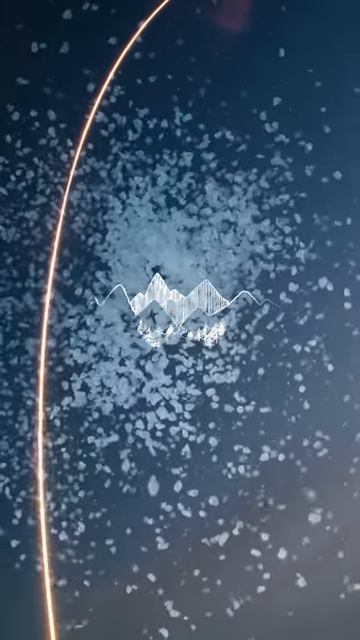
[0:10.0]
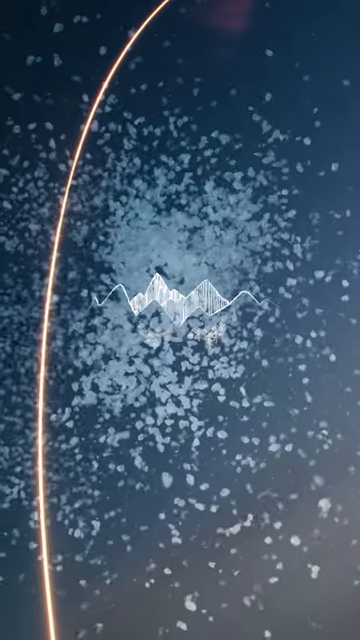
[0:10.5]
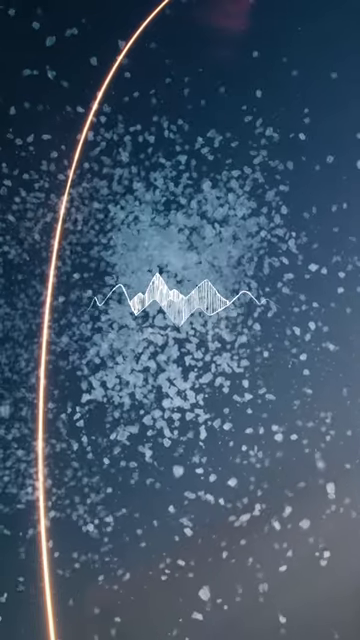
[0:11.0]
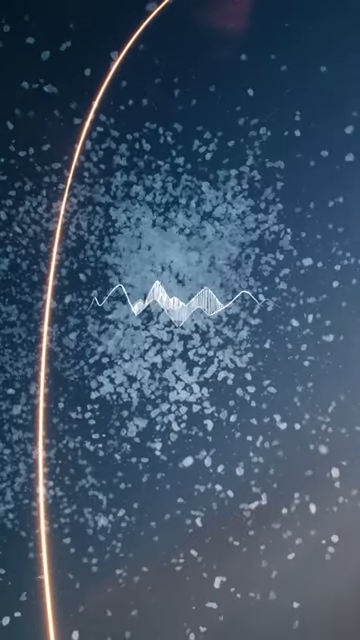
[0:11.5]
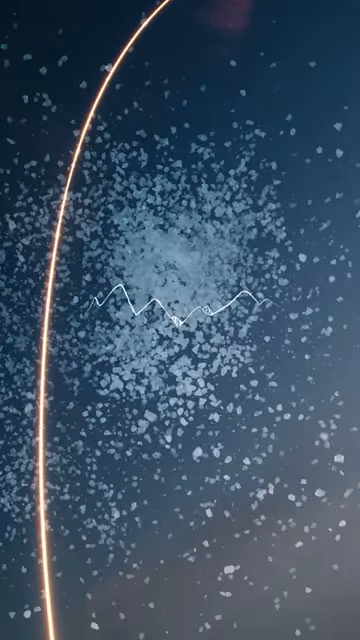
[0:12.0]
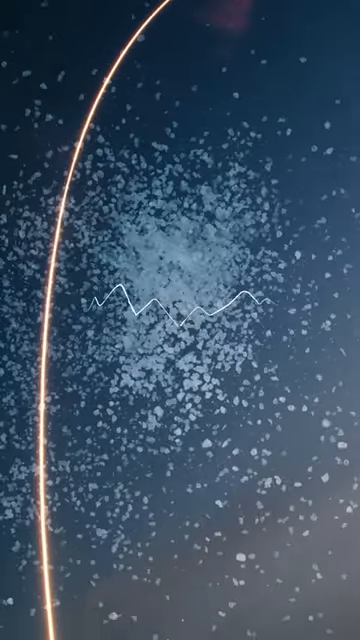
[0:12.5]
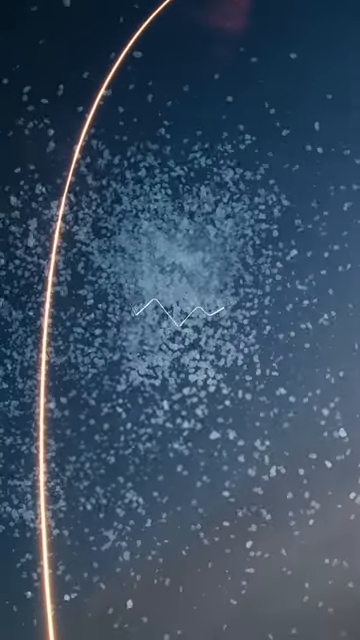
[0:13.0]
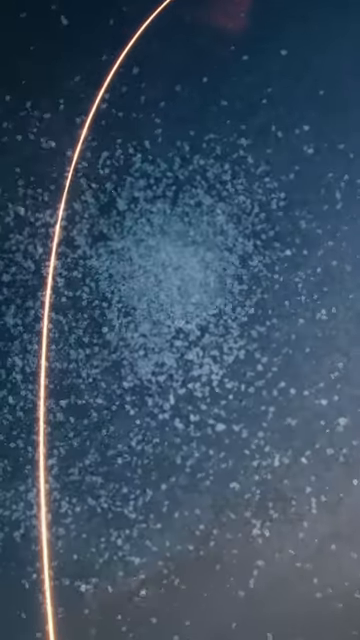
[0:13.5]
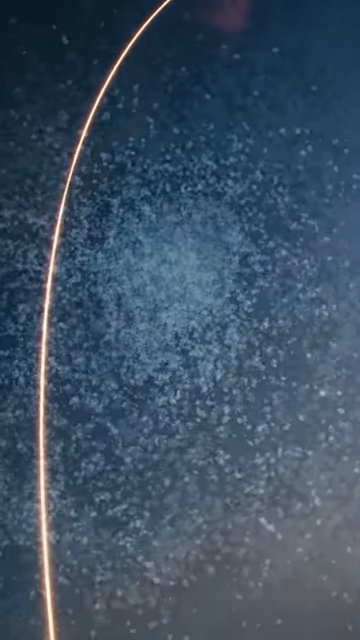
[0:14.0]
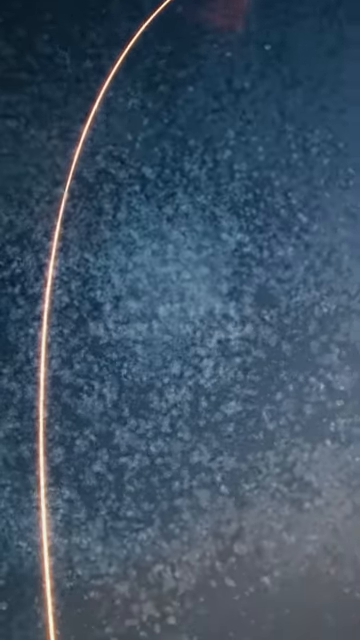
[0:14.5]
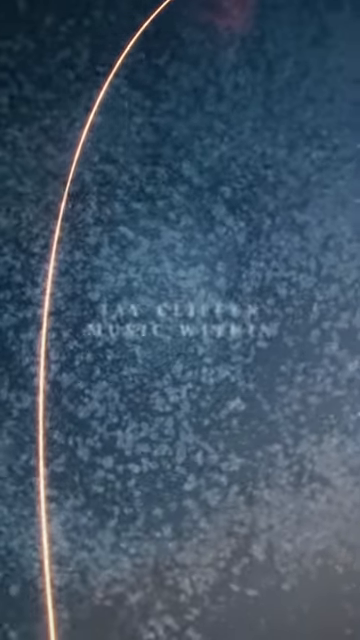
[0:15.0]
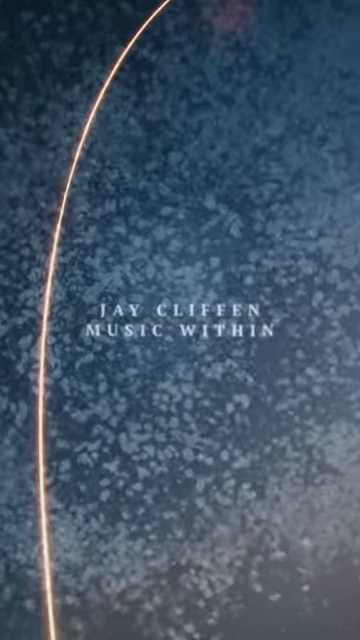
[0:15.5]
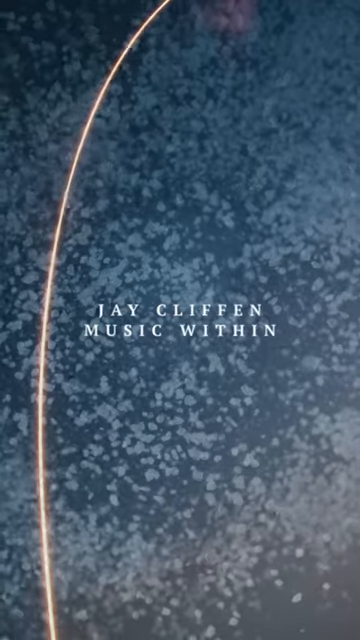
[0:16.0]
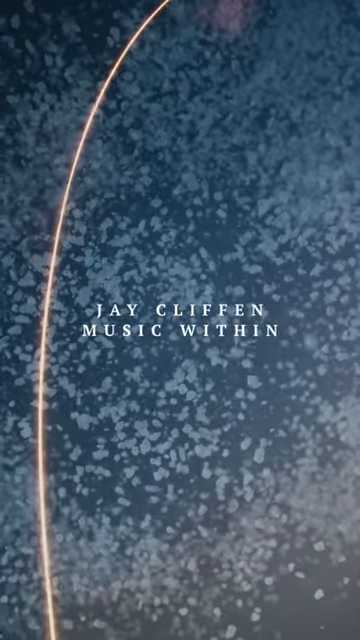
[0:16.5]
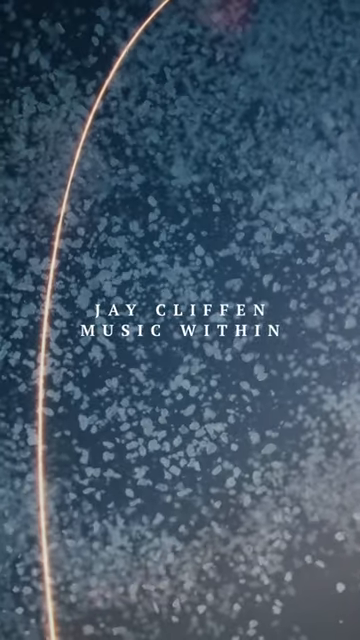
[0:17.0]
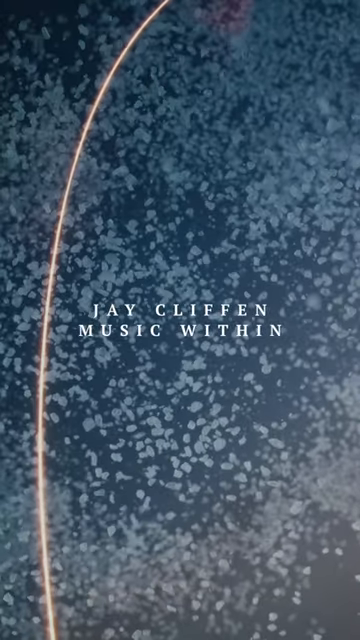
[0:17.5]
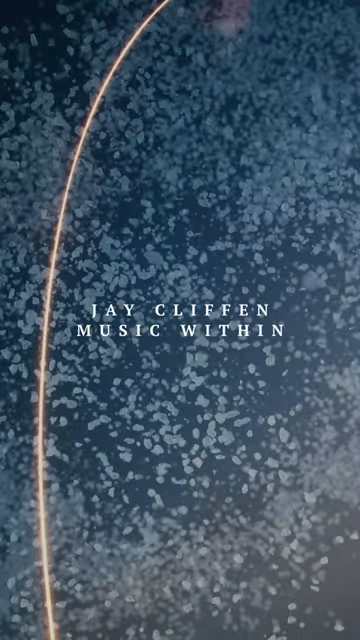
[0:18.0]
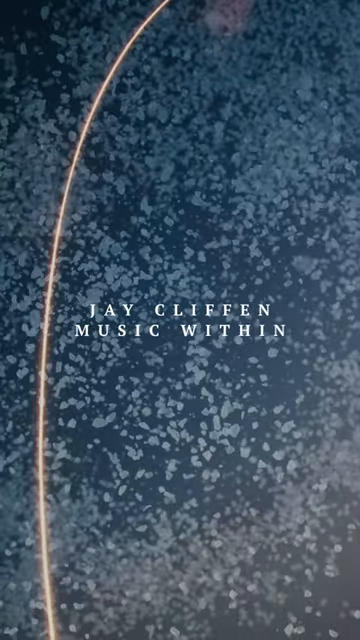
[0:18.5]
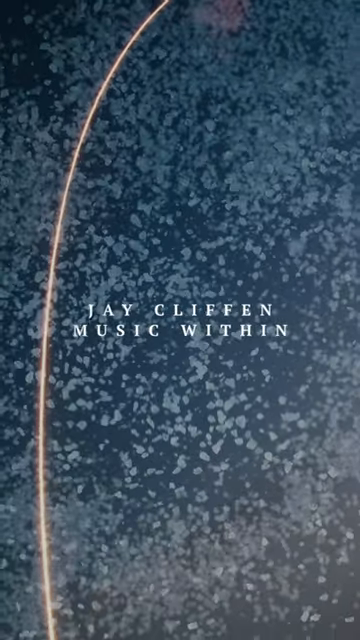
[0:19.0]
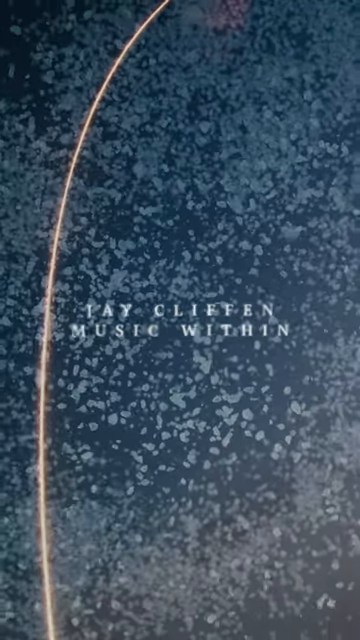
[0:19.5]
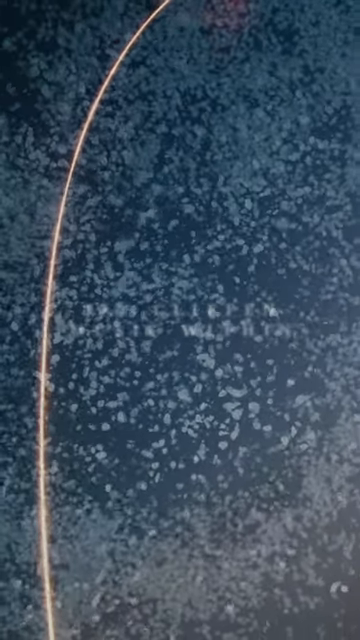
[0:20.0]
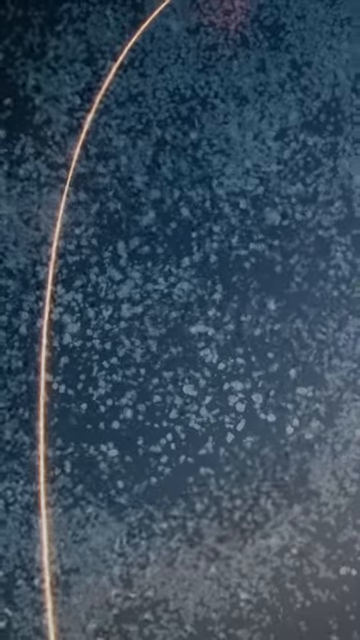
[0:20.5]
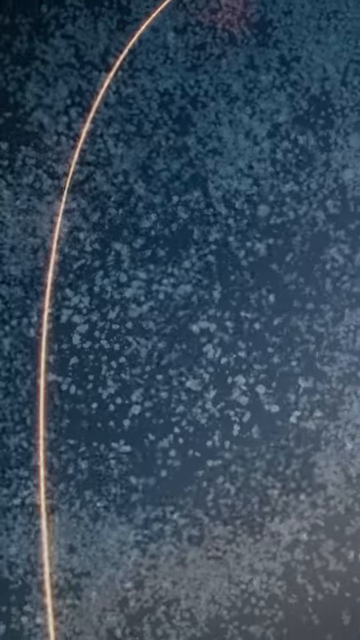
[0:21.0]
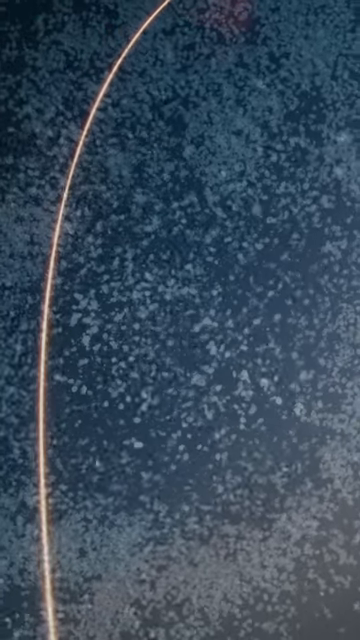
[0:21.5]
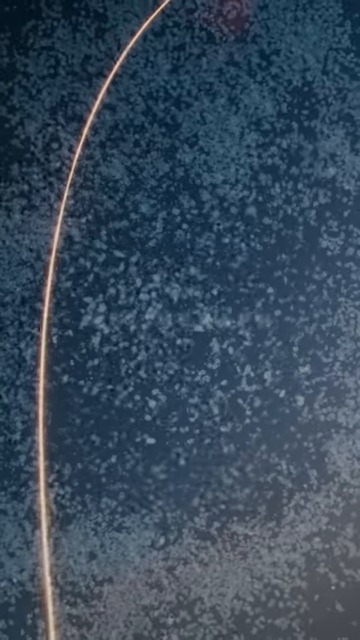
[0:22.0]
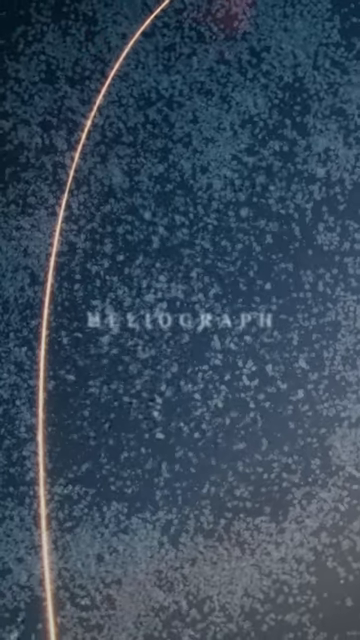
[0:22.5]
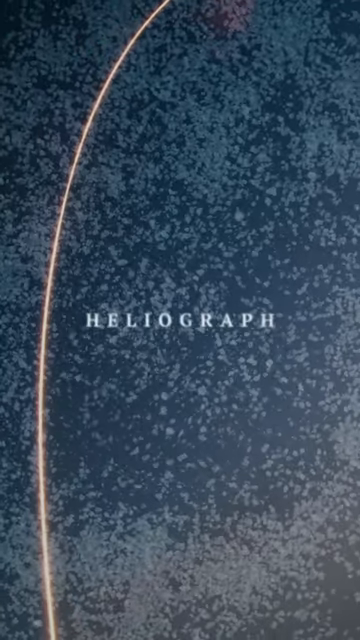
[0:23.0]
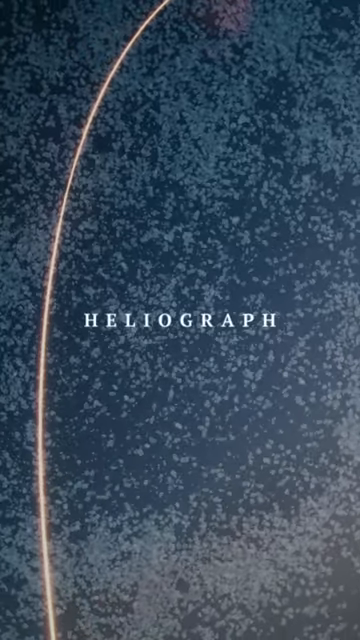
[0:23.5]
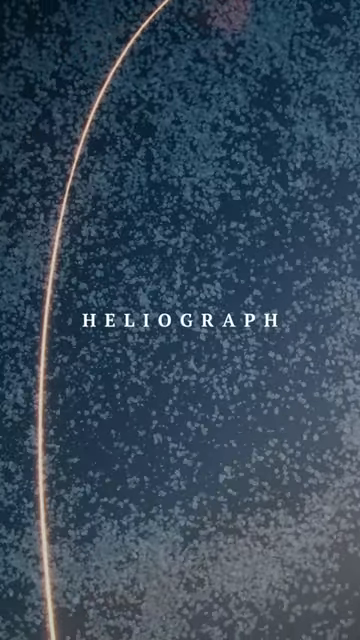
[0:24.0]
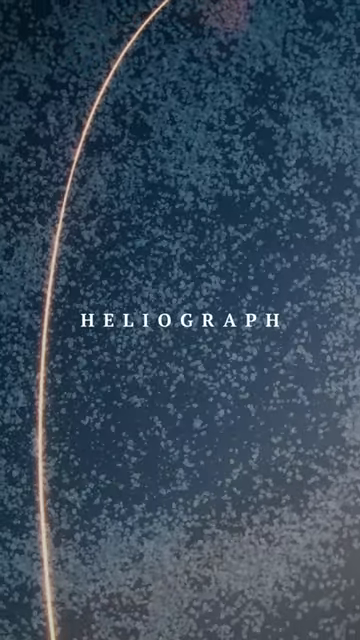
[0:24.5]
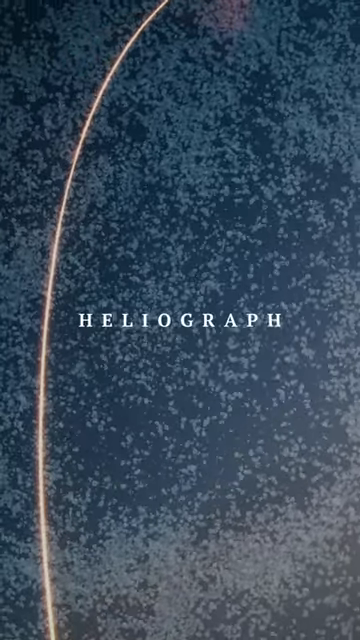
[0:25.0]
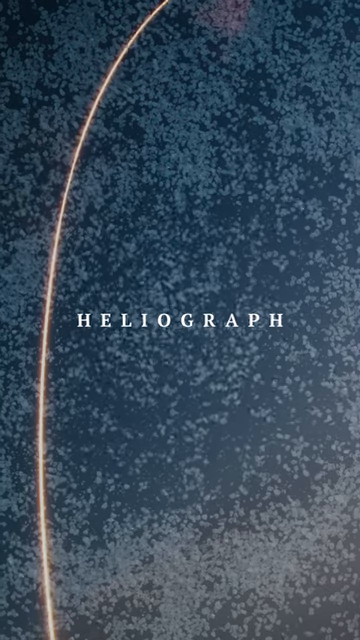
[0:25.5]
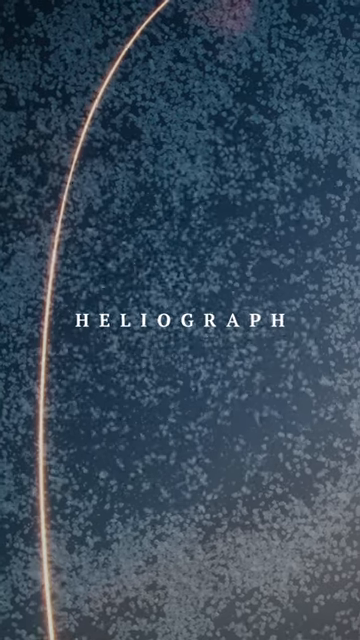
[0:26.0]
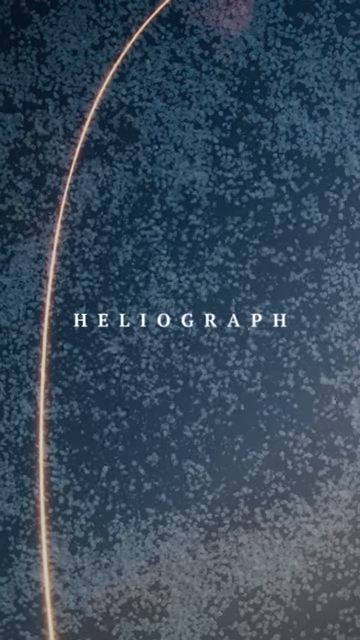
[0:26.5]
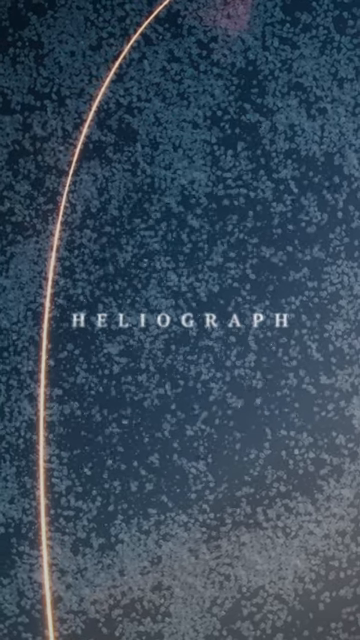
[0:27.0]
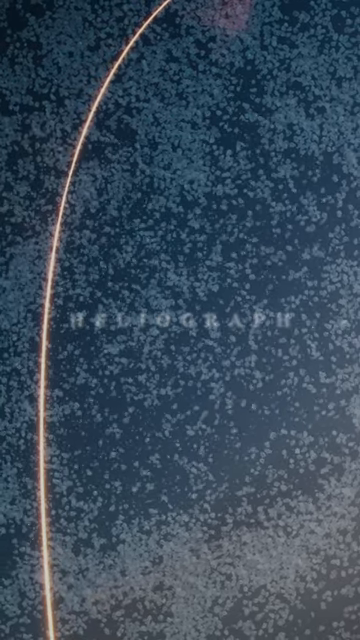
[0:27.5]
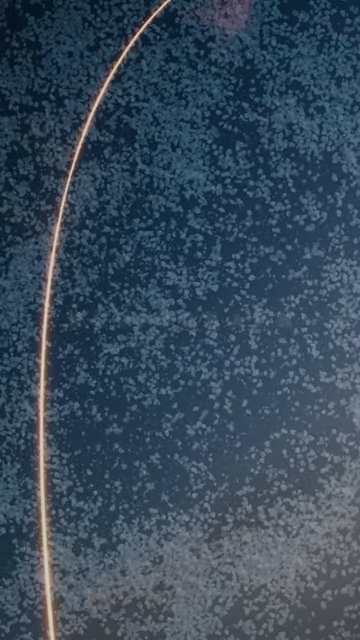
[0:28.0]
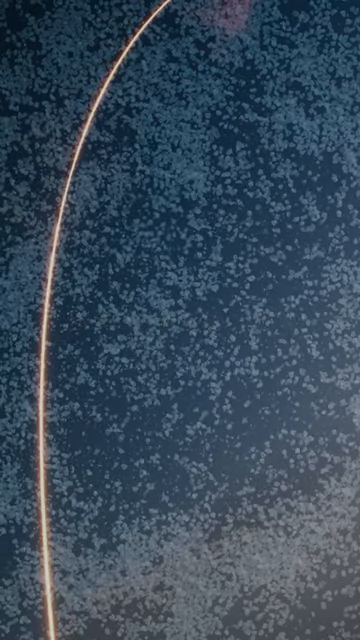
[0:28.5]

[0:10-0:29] The cartoon hills and valleys fade away, and the words "Jay Cliffin" and "Music Within" appear on the screen, possibly a title and its creator. That text then disappears while the blue background, the neon light and the white particles bursting all over the screen remain, and the word "heliograph" appears in white.